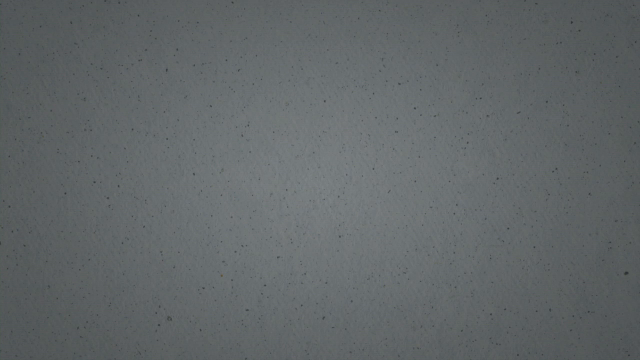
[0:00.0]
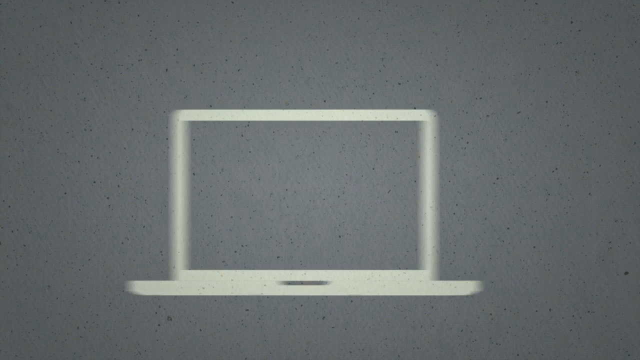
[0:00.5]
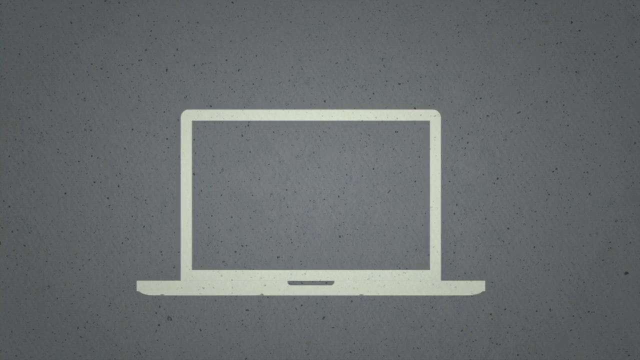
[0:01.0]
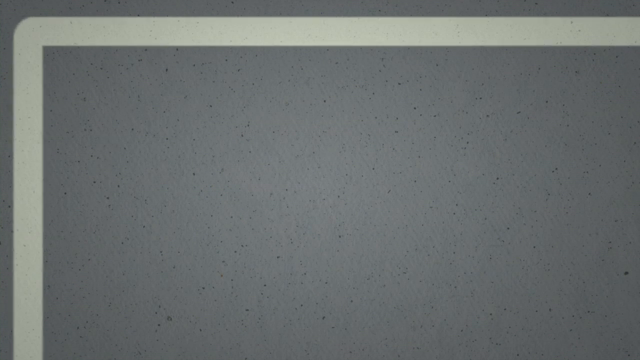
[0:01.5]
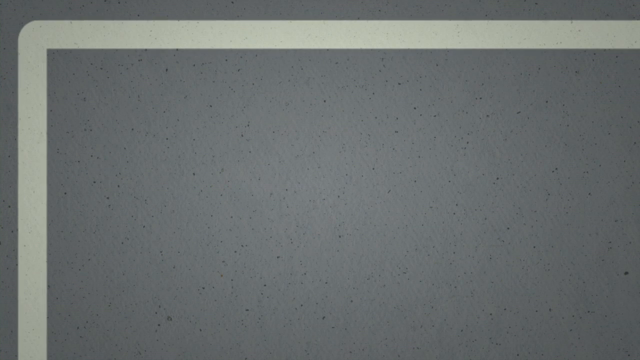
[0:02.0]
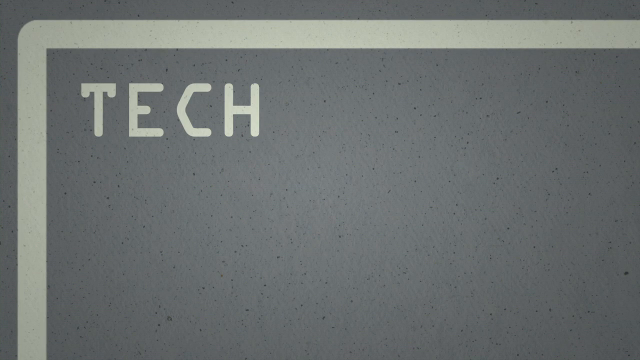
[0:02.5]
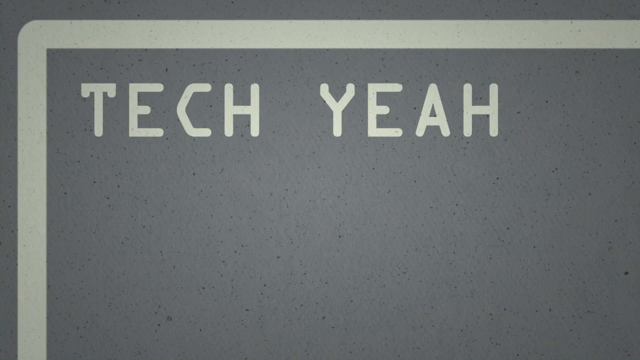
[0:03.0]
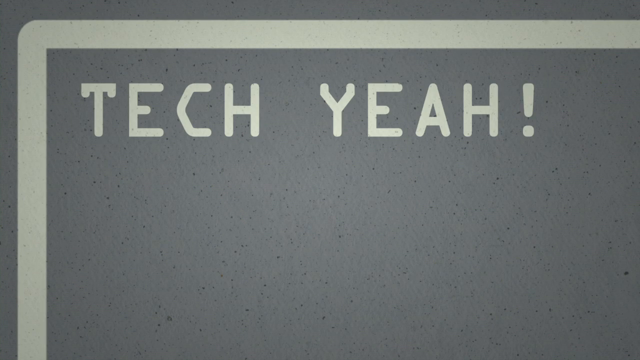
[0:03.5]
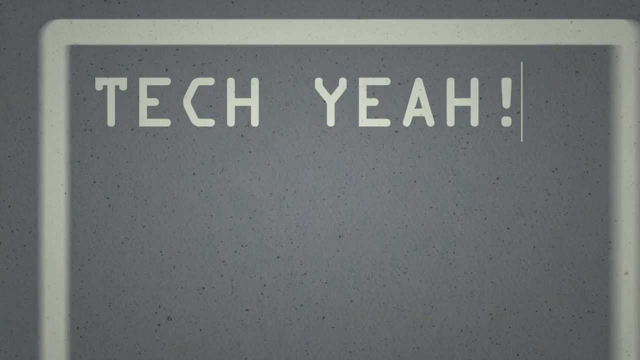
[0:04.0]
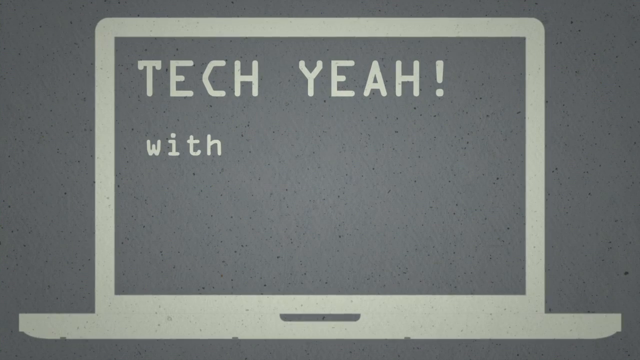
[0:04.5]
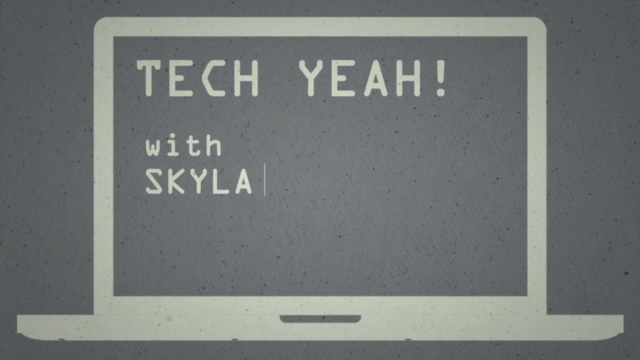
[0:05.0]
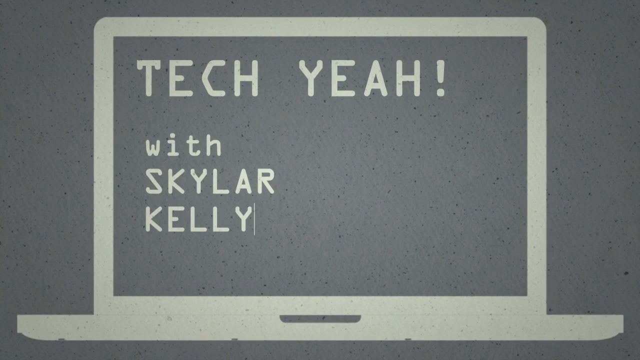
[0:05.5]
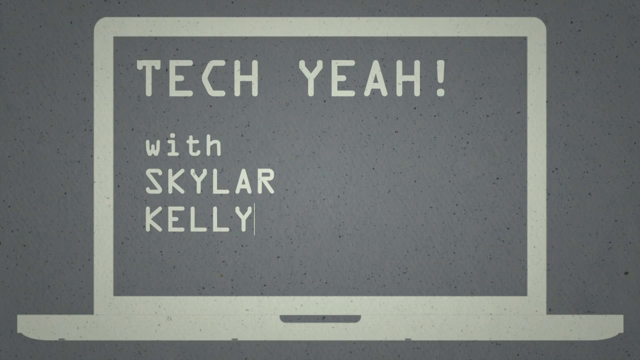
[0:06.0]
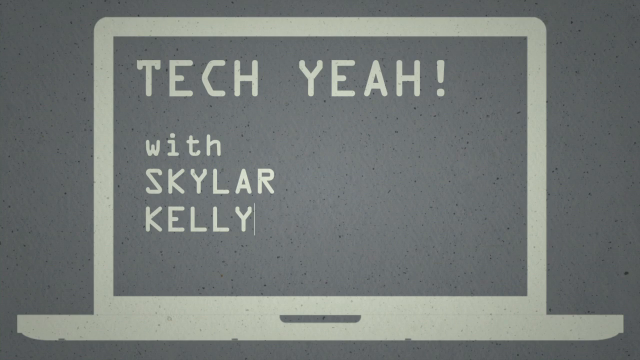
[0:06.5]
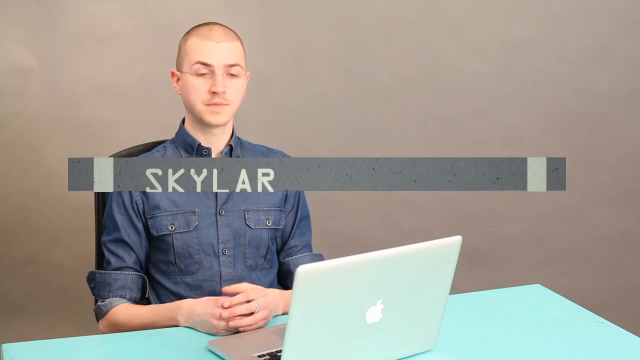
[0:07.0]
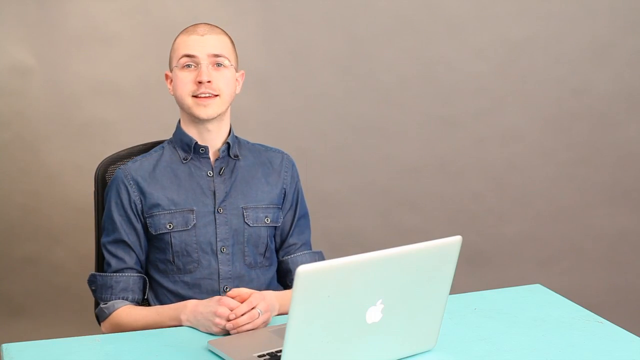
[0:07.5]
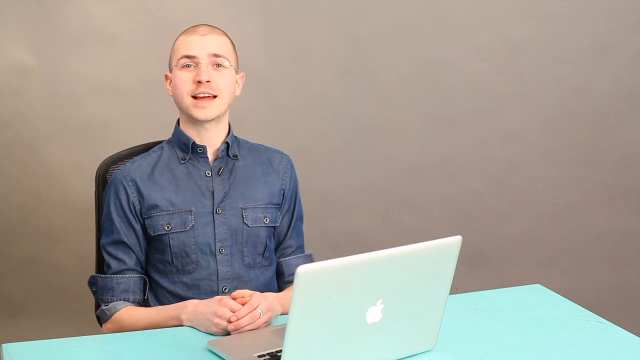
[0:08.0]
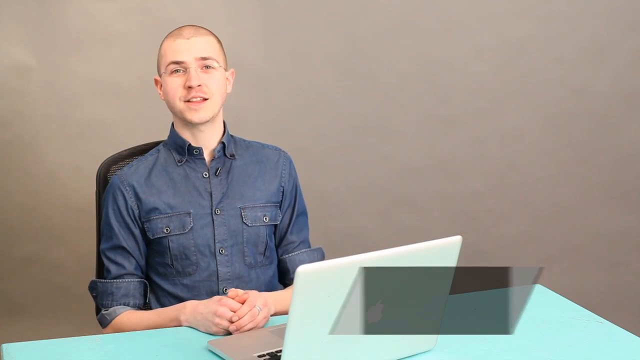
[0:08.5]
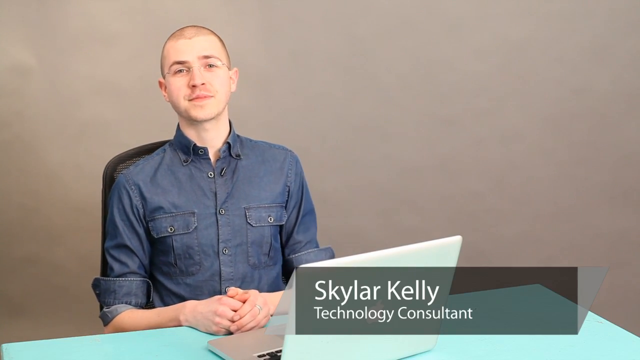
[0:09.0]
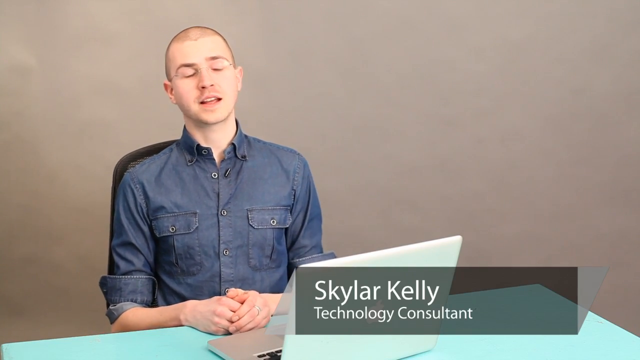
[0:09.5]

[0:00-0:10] The video opens on a dark gray background with a kind of effect happening in it. Information in a light gray text appears on the screen on an animated-looking laptop screen set against the gray background, and the text "Skyler Kelly" appears. Then a person appears: a Caucasian male, probably around 25, wearing a kind of blue denim shirt and glasses. He is identified as Skyler Kelley, a technical consultant or technology consultant.